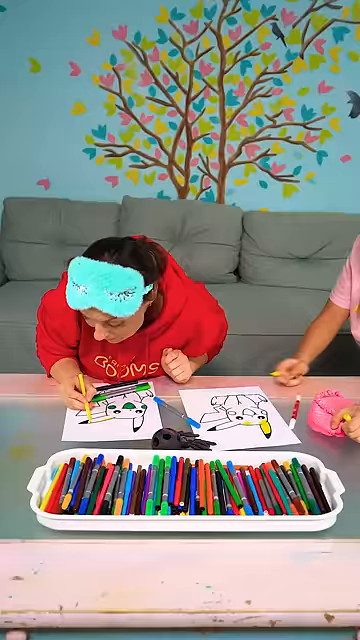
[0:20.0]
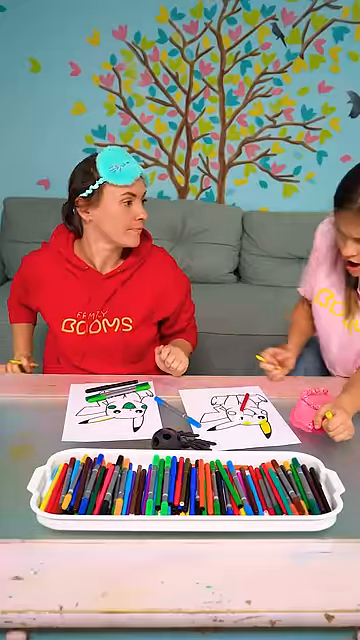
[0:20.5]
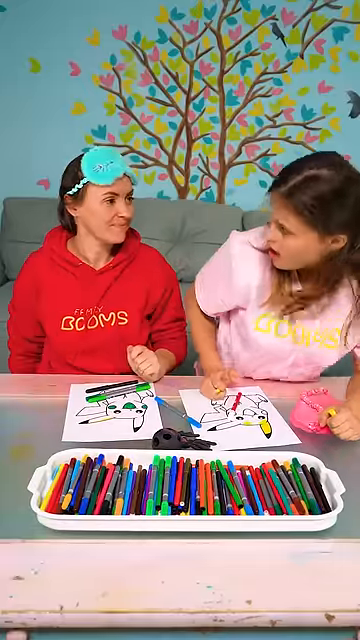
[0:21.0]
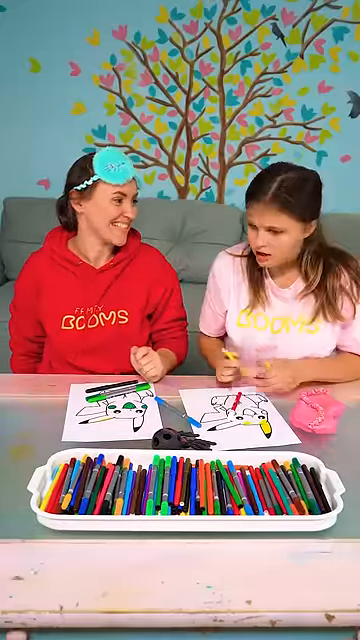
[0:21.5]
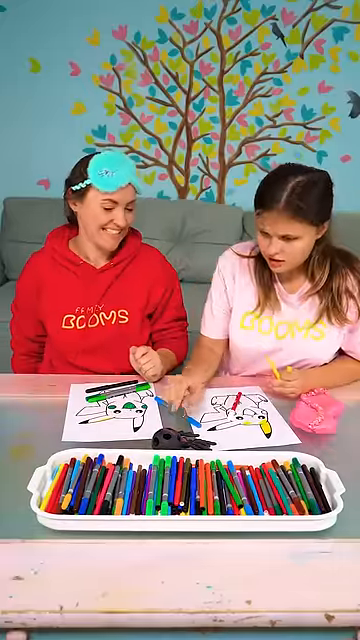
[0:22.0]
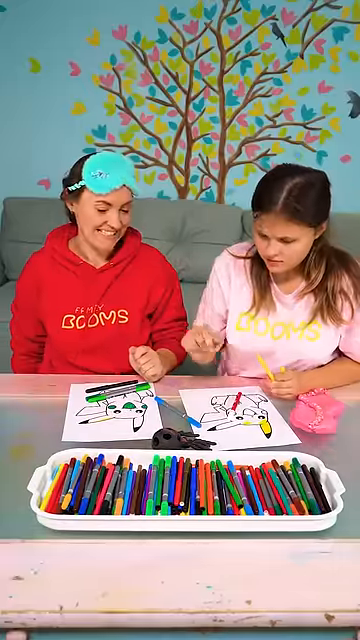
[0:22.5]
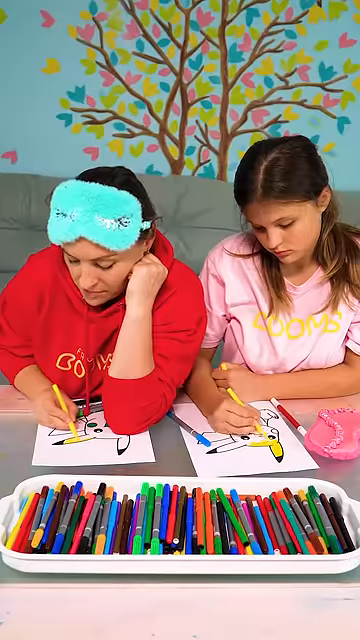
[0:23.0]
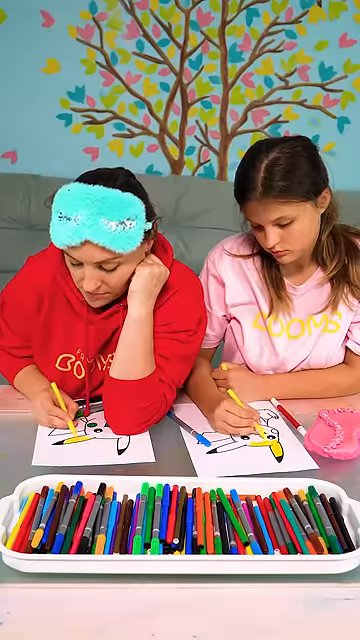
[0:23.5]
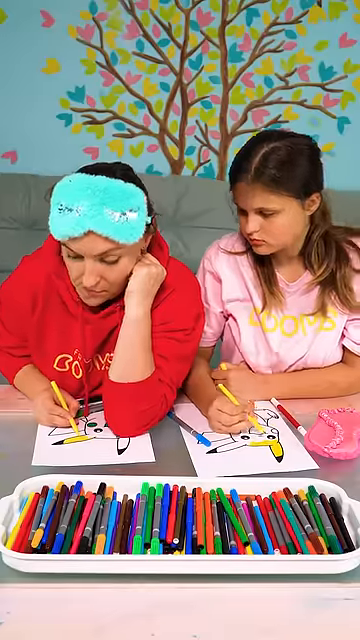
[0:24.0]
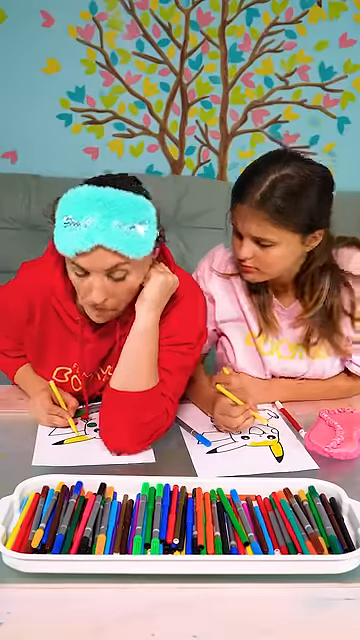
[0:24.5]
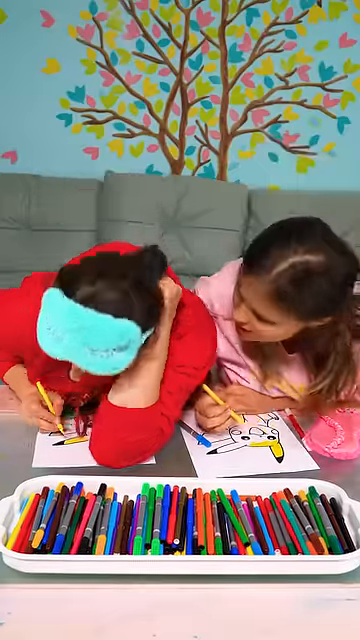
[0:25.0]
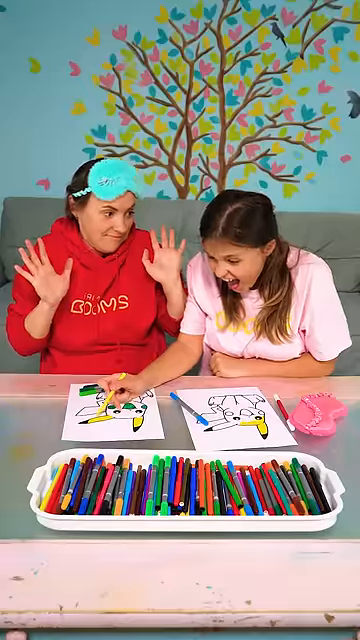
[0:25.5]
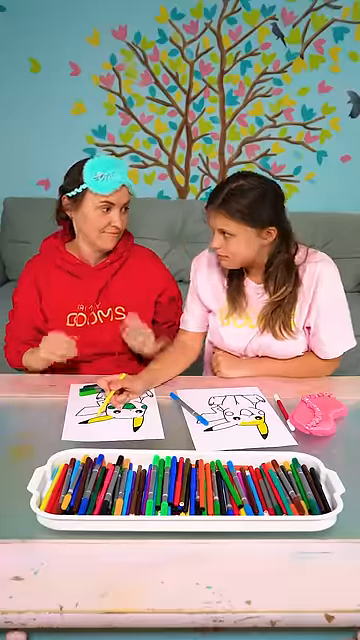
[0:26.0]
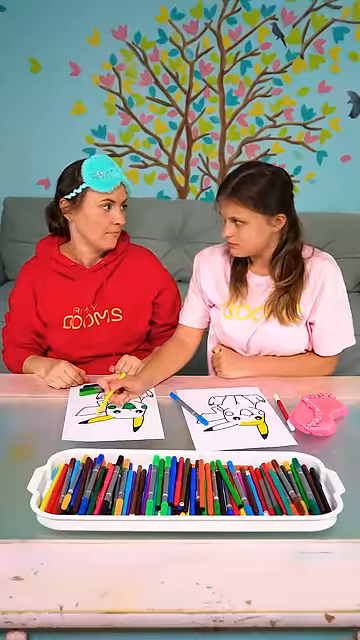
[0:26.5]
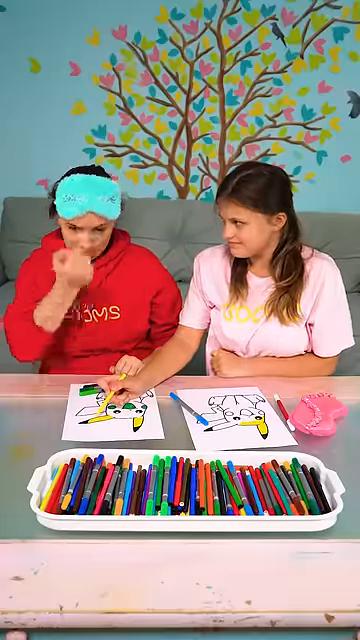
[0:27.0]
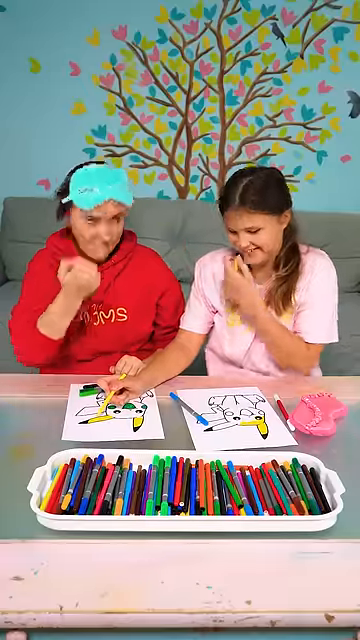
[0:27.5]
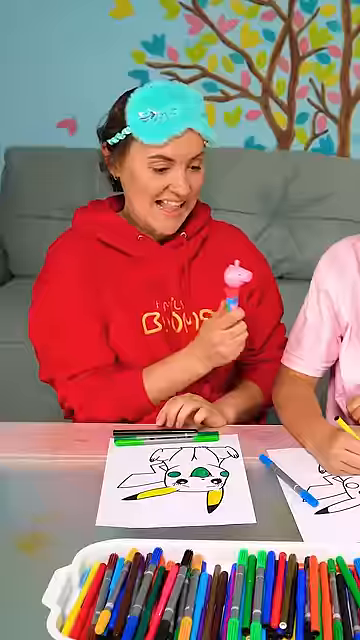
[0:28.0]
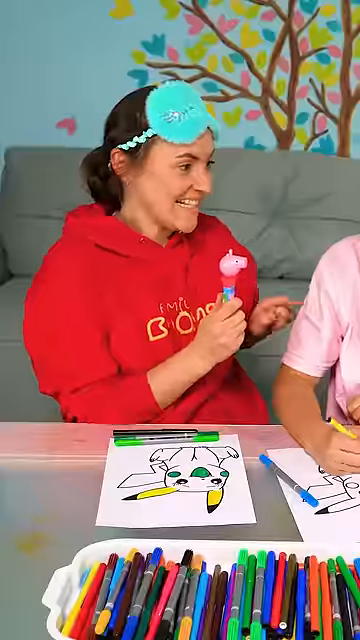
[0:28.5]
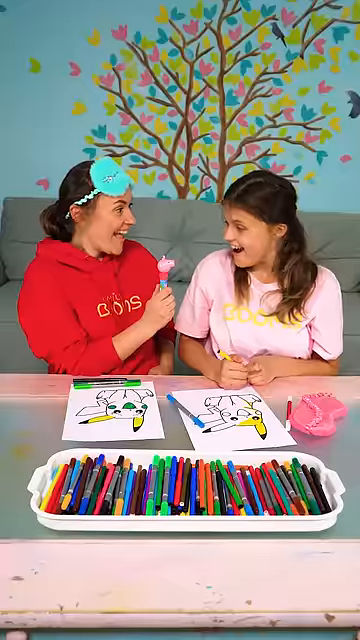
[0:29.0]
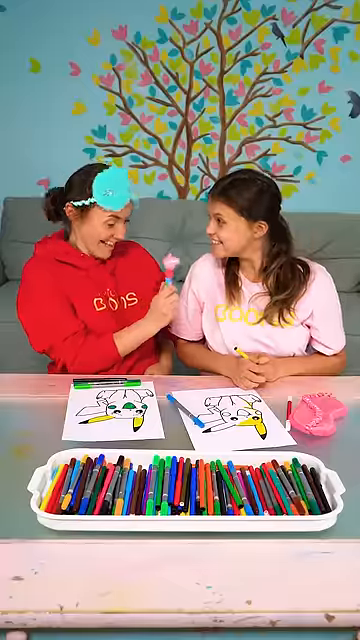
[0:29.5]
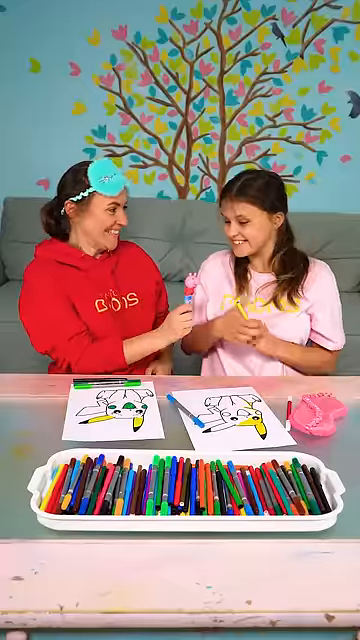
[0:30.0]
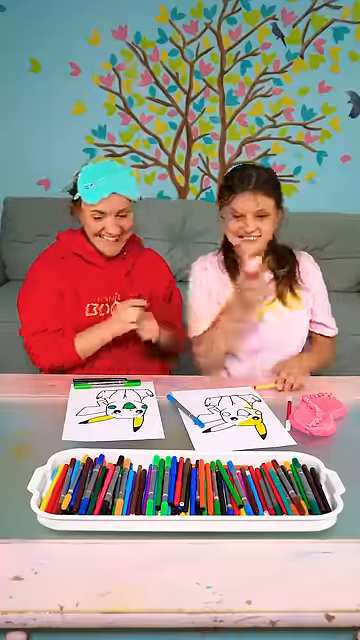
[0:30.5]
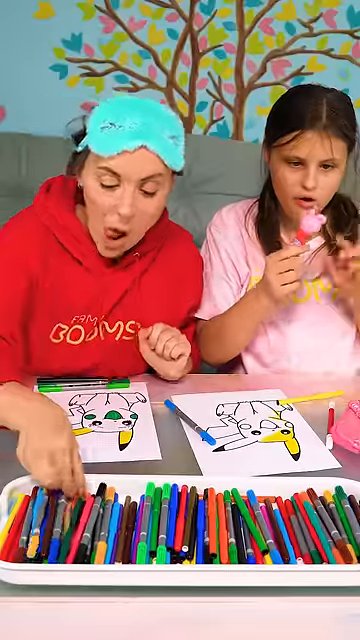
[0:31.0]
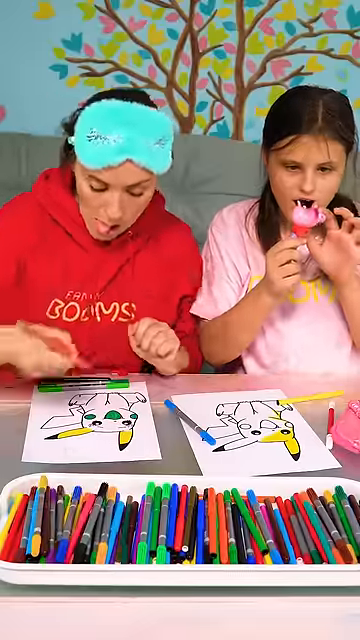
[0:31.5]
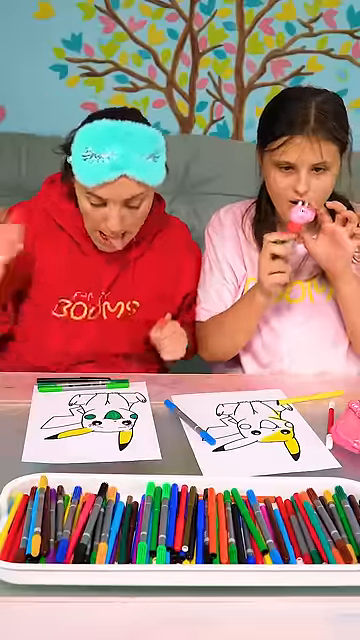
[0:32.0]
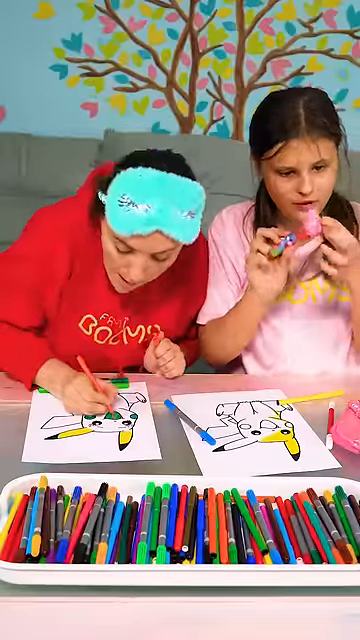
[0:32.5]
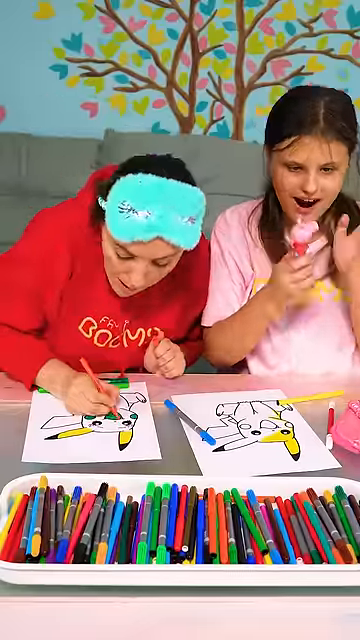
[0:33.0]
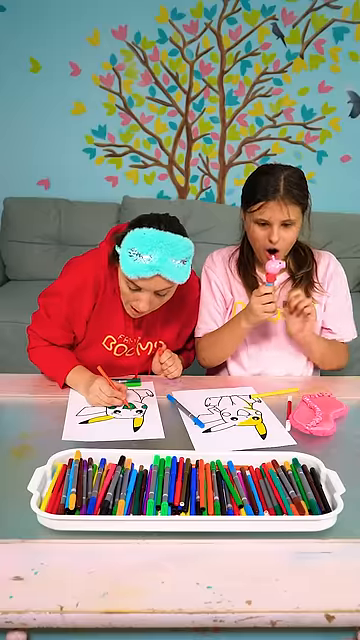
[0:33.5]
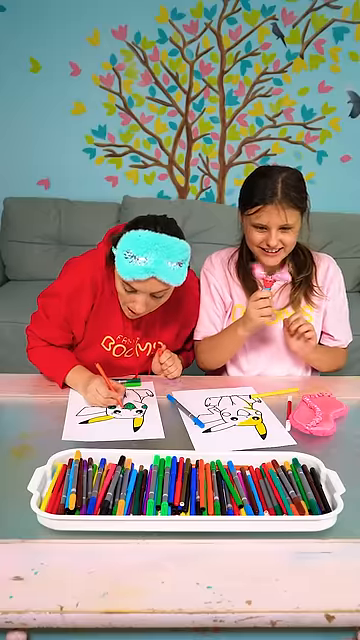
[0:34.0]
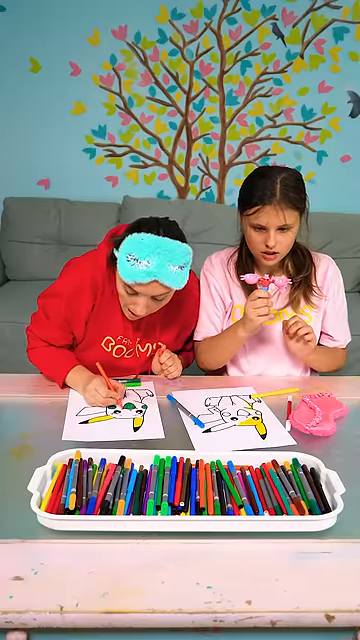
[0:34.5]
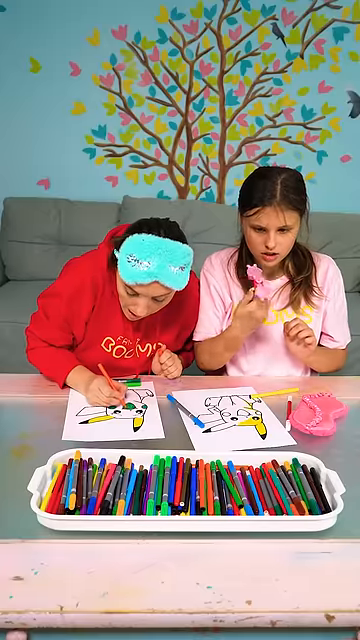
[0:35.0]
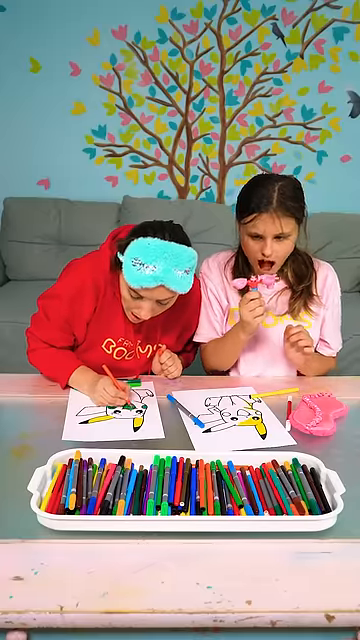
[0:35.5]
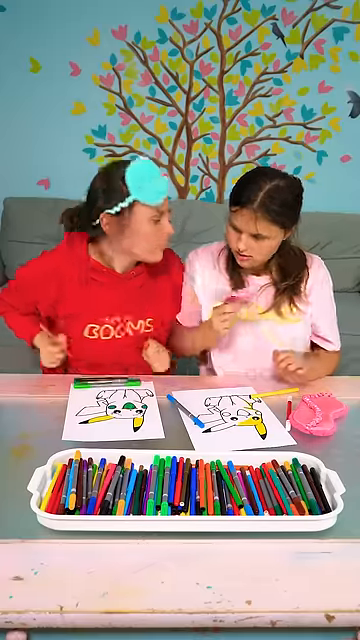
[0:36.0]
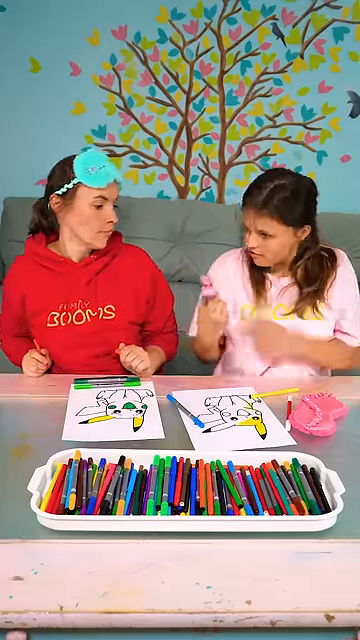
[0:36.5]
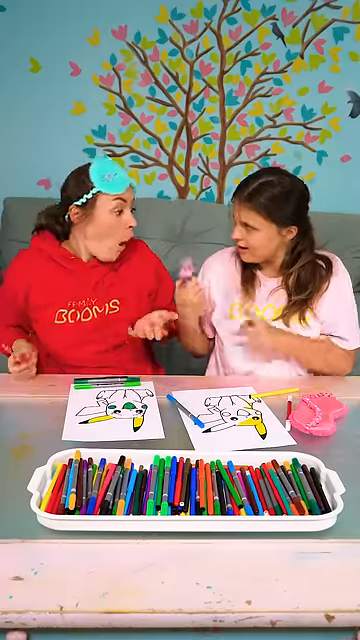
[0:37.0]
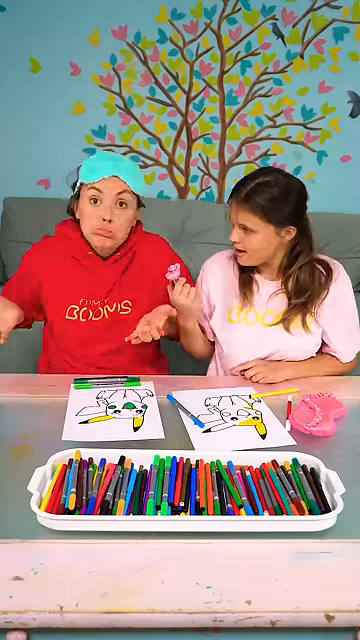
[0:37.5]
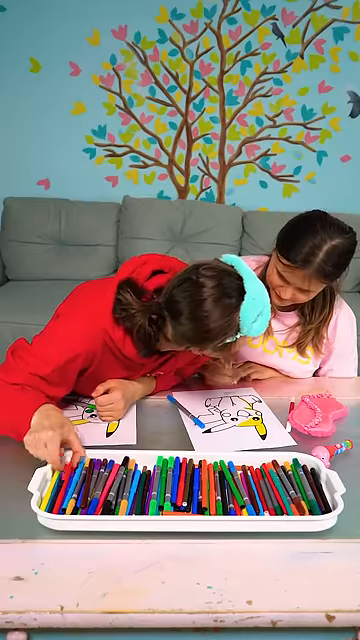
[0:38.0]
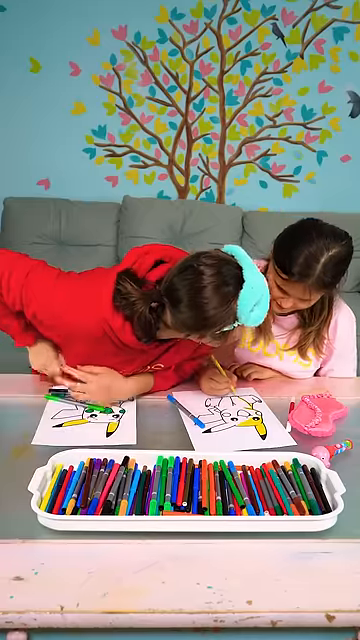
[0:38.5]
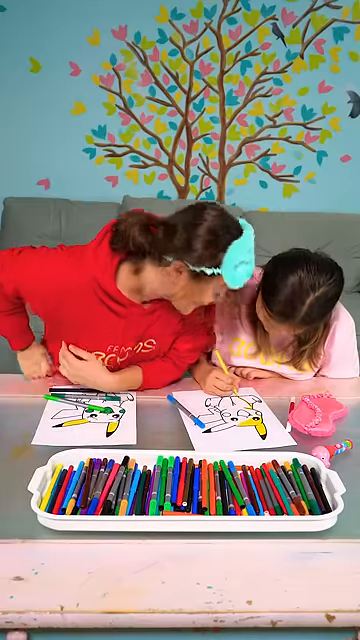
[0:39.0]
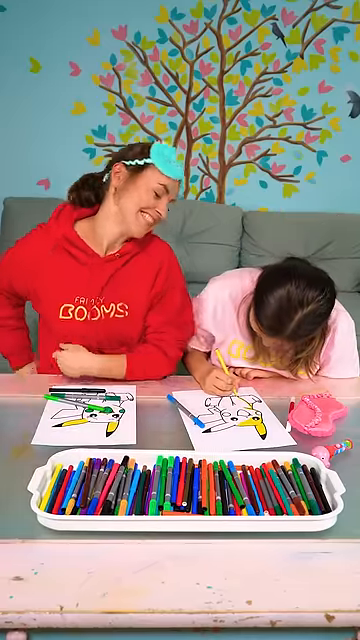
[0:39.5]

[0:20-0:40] Even though neither of them had a yellow marker, they both now have yellow markers and are coloring in Pikachu's ears. The woman looks like she puts a large rubber spider on the table briefly, then looks over at the girl and hands her some kind of pen or Peppa Pig toy. The girl plays with it; its mouth opens, she pushes a button, and it splits in half. She holds it up and shows it to the woman as if she is shocked or thinks it is broken. The woman continues drawing and tries to use her elbow to block the girl from seeing what she is doing, her tongue out in concentration as she draws. They seem to be having fun, laughing as they color in their Pikachu drawings. The woman looks like she might be in her 30s, and the girl looks like she might be 12, with medium-length dark hair pulled halfway back. The woman still has her blindfold on top of her head; she appears to have dark hair, though it is not completely visible.